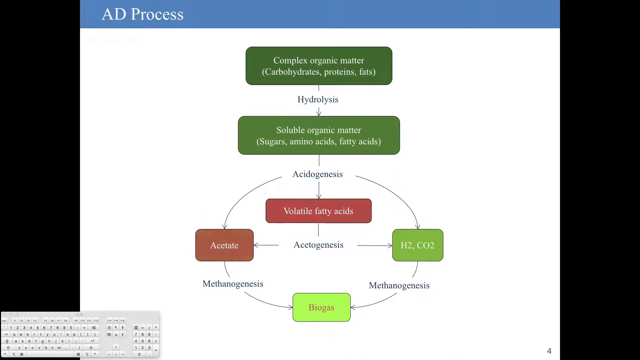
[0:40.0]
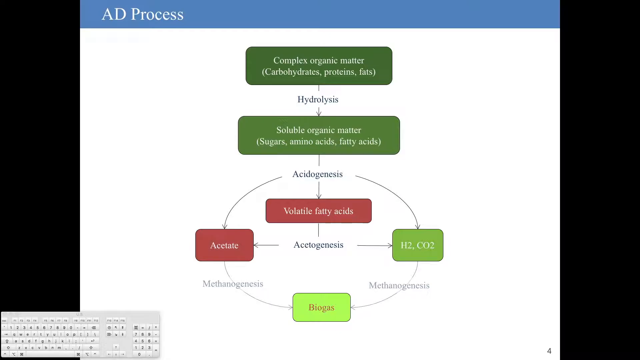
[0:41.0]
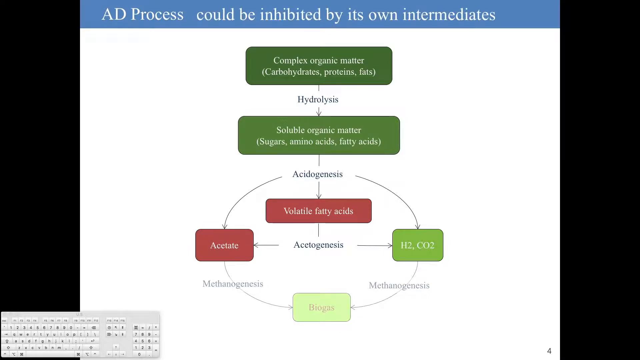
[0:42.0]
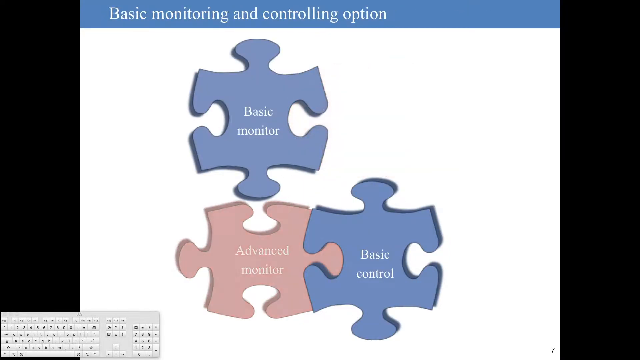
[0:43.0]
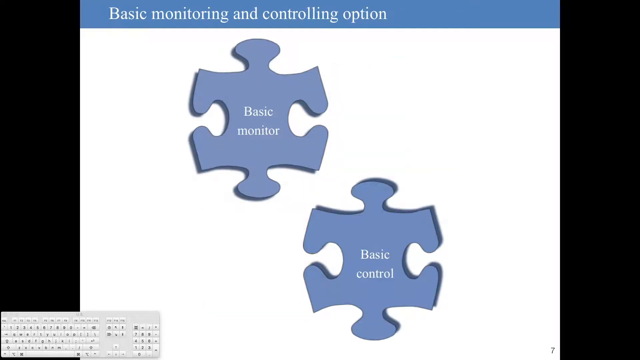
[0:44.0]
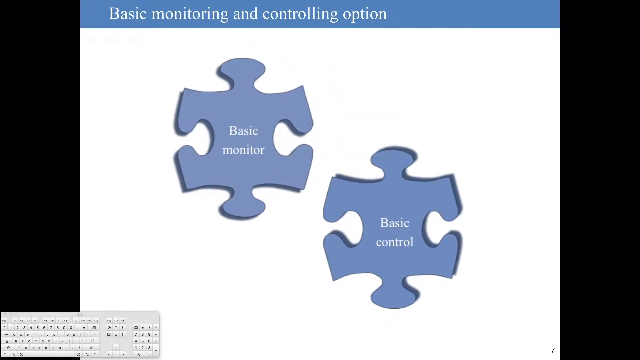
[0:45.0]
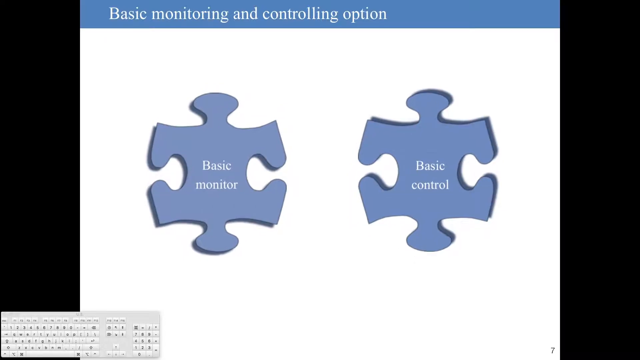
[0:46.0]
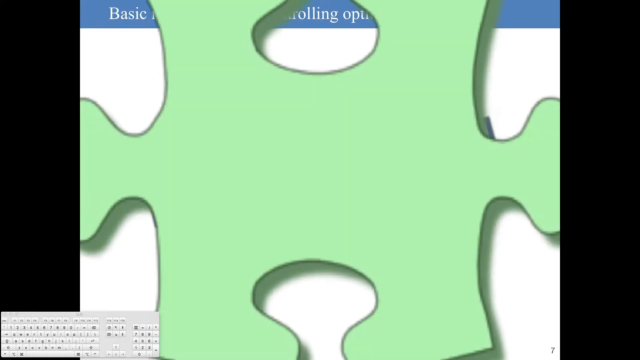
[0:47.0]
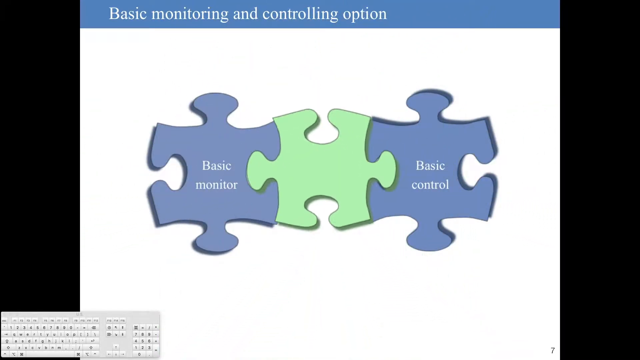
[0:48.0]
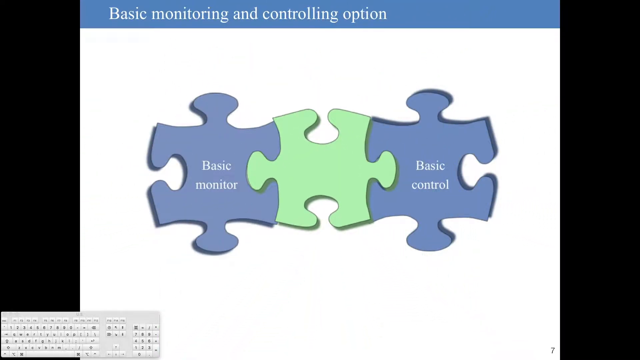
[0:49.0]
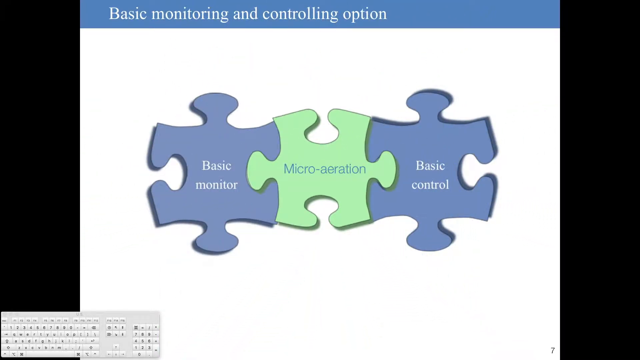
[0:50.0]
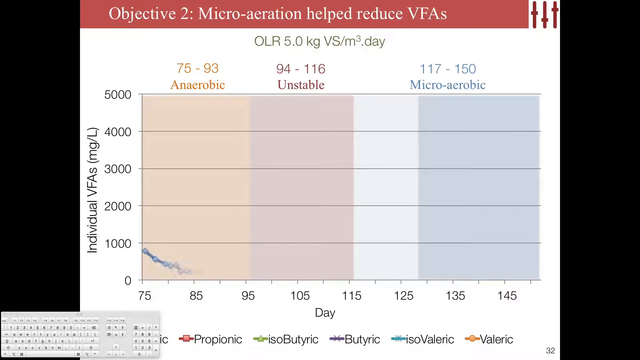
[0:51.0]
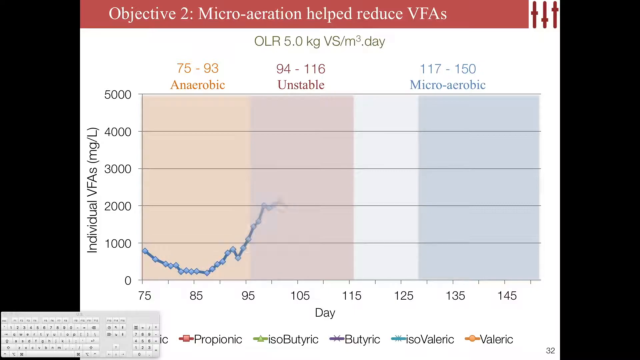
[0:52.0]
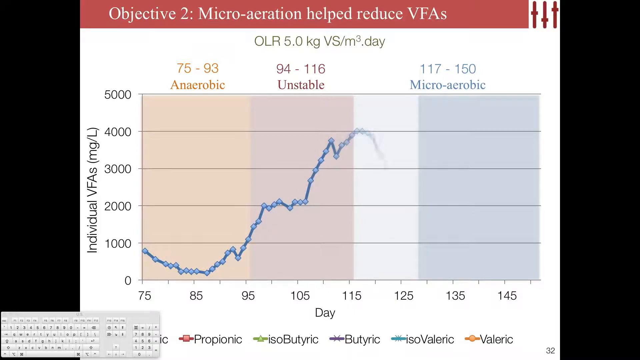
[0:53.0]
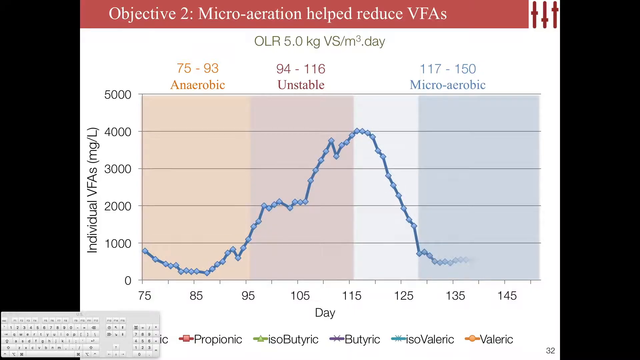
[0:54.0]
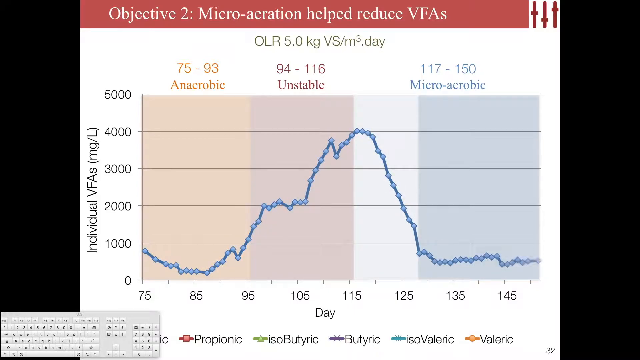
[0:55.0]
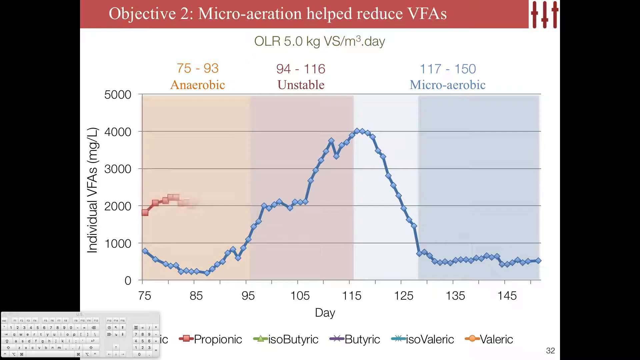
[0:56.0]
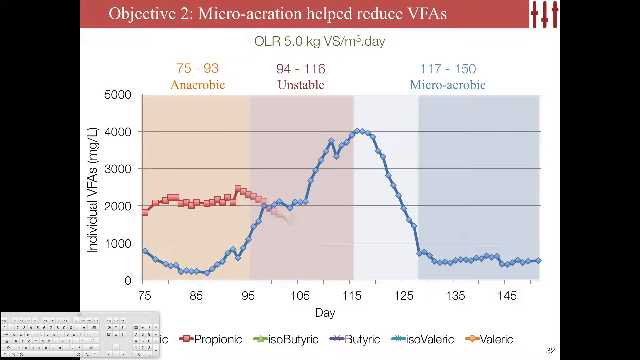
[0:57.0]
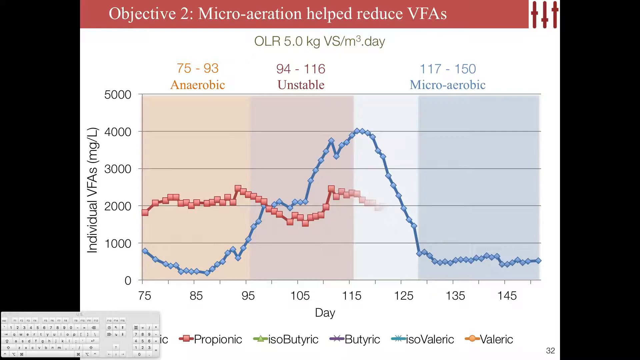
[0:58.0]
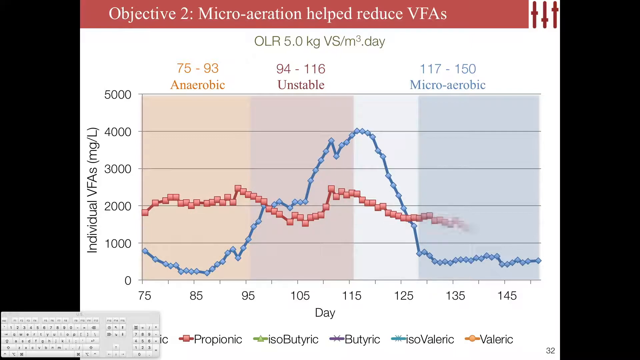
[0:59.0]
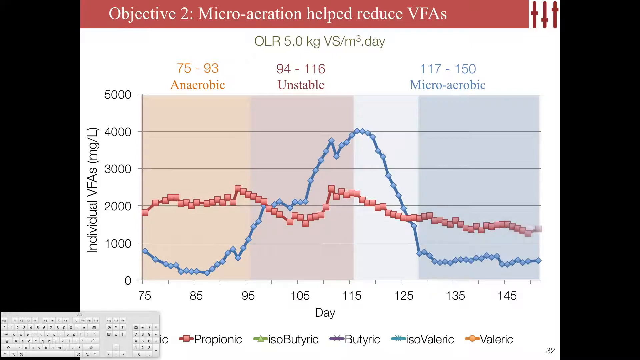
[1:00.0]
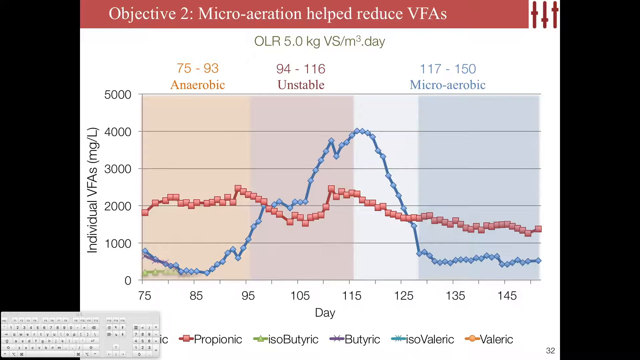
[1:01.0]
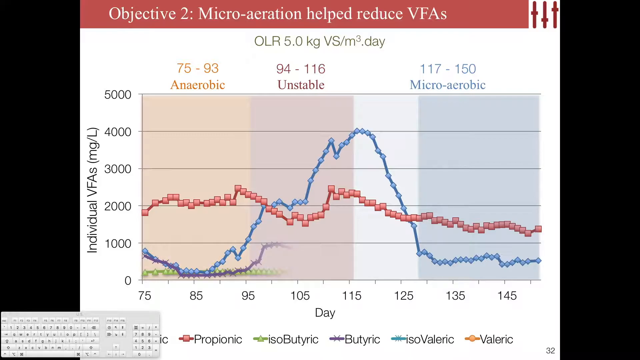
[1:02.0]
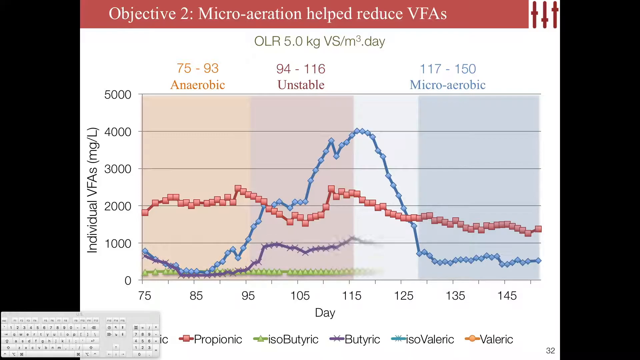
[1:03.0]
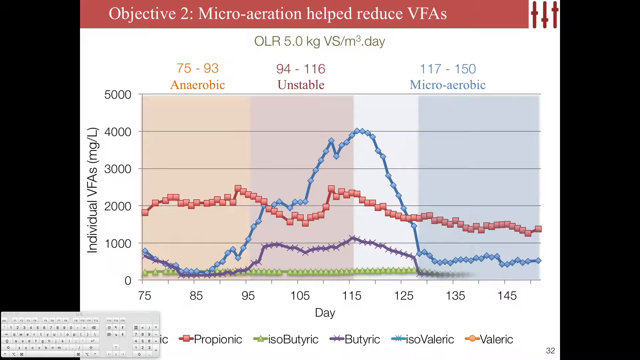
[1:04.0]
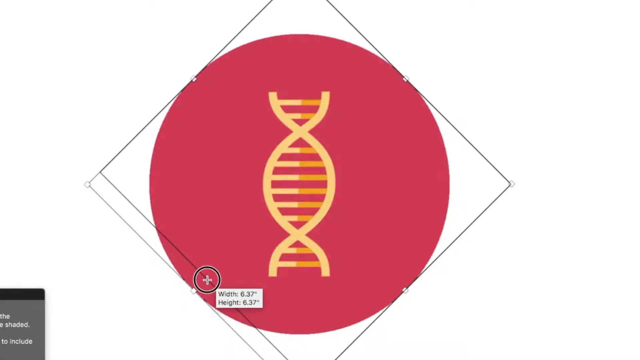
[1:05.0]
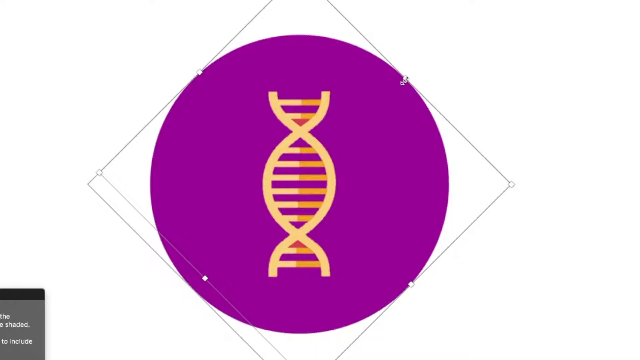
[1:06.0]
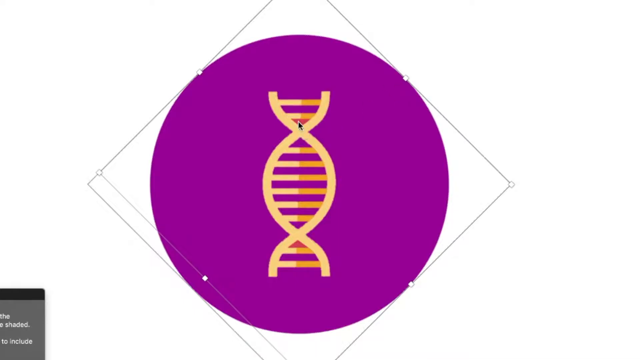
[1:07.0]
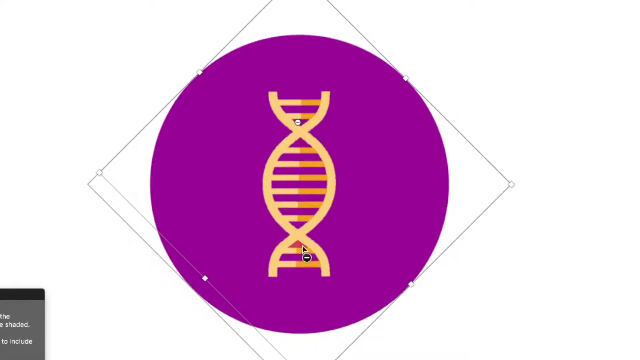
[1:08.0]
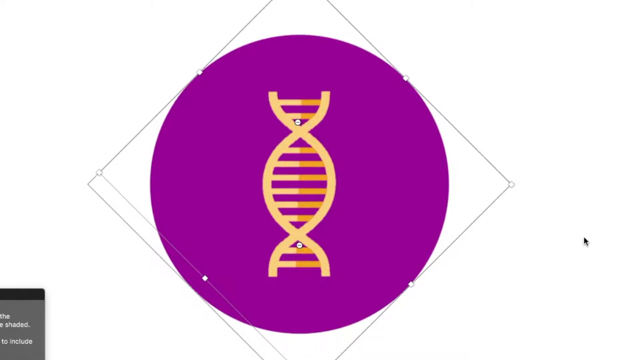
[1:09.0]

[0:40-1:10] The AD process screen continues, showing "basic monitoring and controlling options" with puzzle pieces. The top two puzzle pieces are connected: the one on the left is lavender and reads "basic monitor", and the one on the upper right is mauve and reads "advanced control". Of the two pieces toward the bottom of the screen, the one on the left is dusty rose and reads "advanced monitor", and the piece connected to it on the bottom right is lavender and reads "basic control". The top right piece, advanced control, and the bottom left piece, advanced monitor, disappear, leaving only the two lavender pieces, basic monitor on the top left and basic control on the lower right. They move around and change positions so that they are side by side. A mint green puzzle piece then appears and moves into position in the middle of the screen between them, with basic monitor on the left and basic control on the right; the mint green piece reads "micro-aeration". Next, "objective two, micro-aeration help reduce VFAs" appears, and beneath it is an individual VFAs chart. A blue graph is on the chart, a red graph appears across it, and finally a purple graph progresses across the chart from the left side to the right side of the screen.